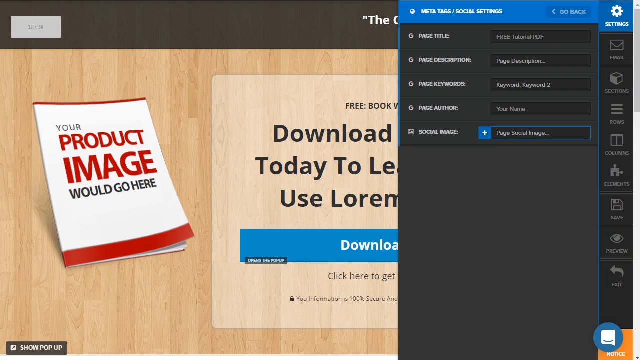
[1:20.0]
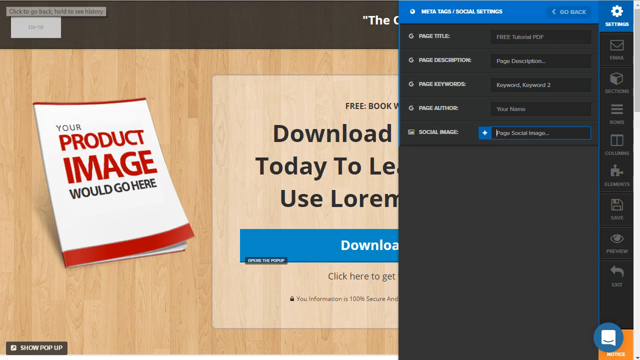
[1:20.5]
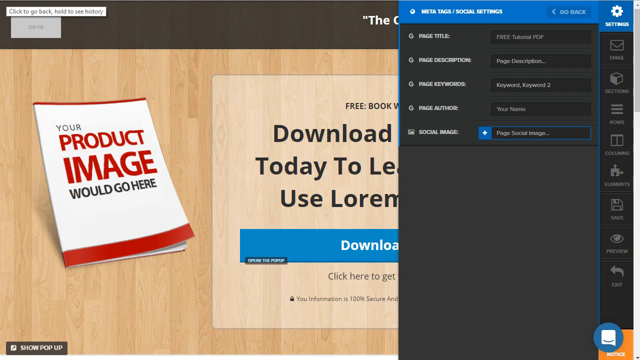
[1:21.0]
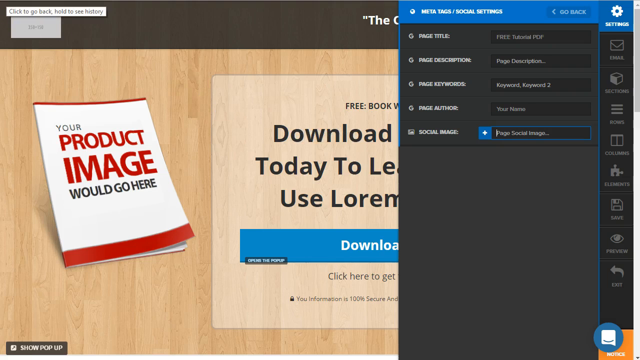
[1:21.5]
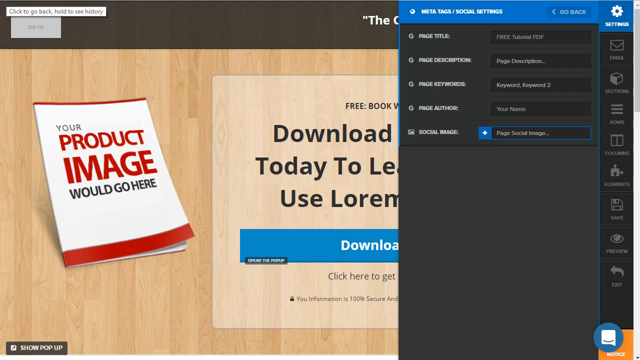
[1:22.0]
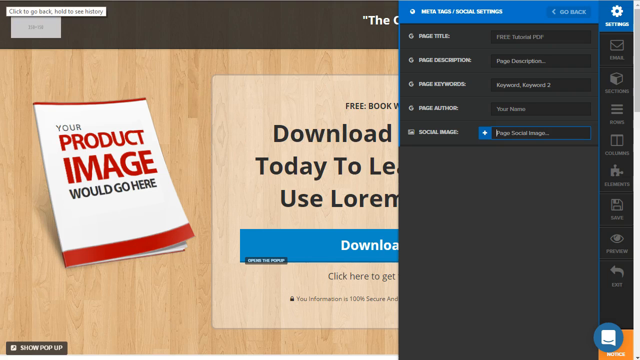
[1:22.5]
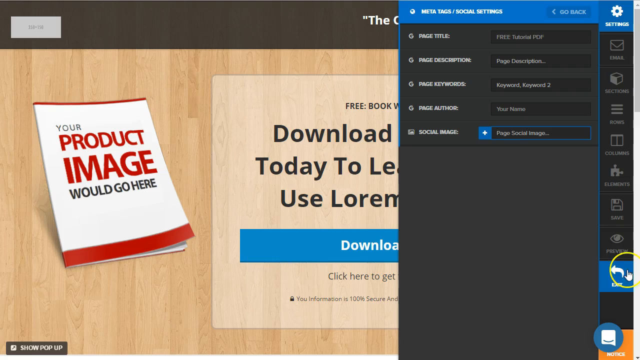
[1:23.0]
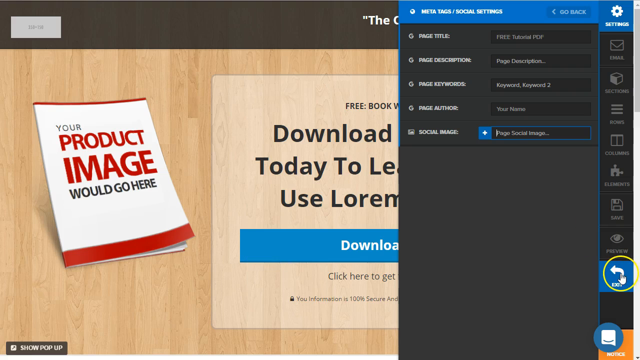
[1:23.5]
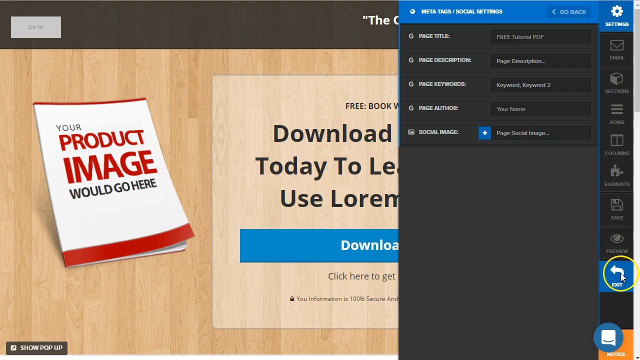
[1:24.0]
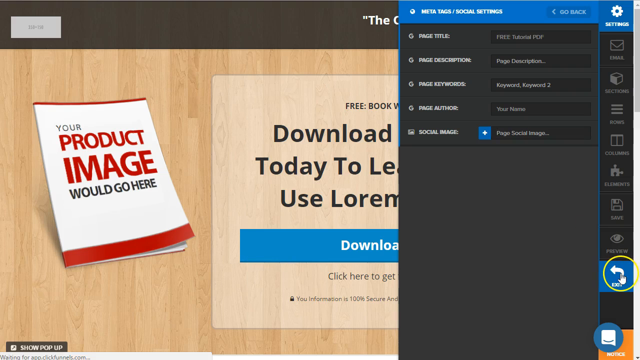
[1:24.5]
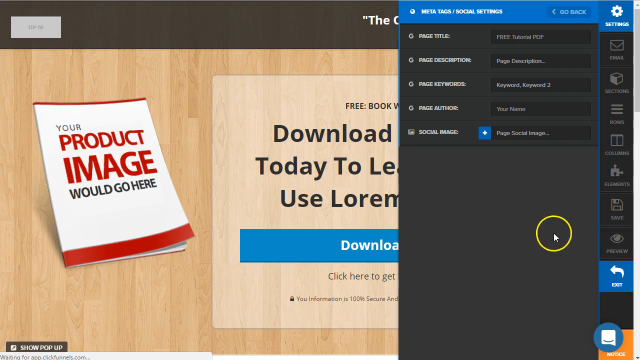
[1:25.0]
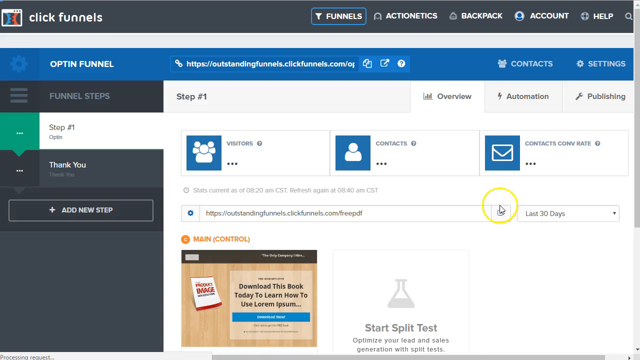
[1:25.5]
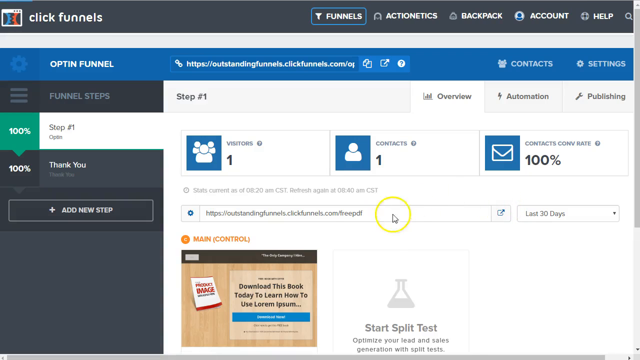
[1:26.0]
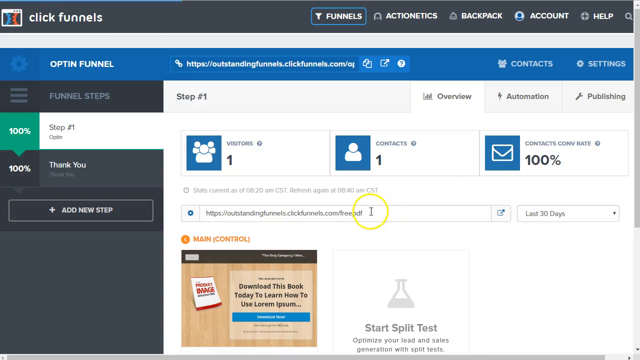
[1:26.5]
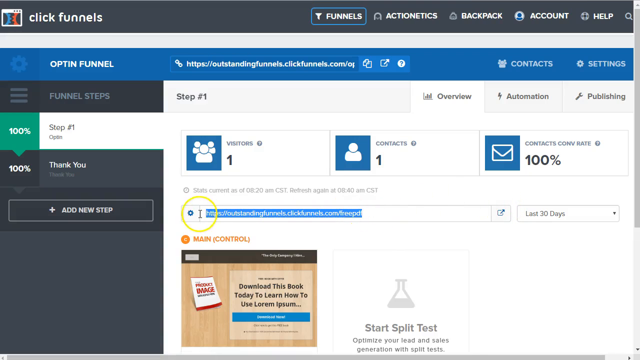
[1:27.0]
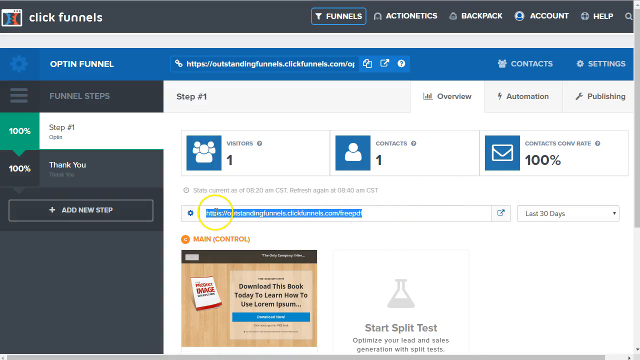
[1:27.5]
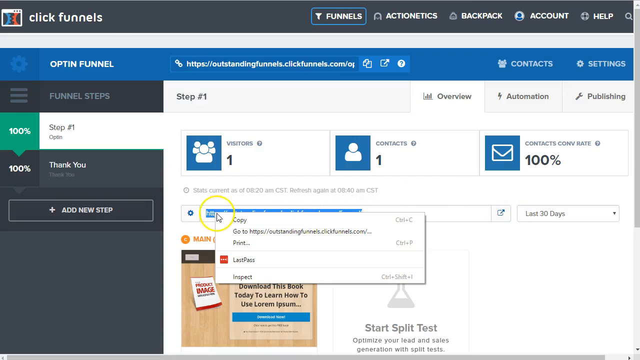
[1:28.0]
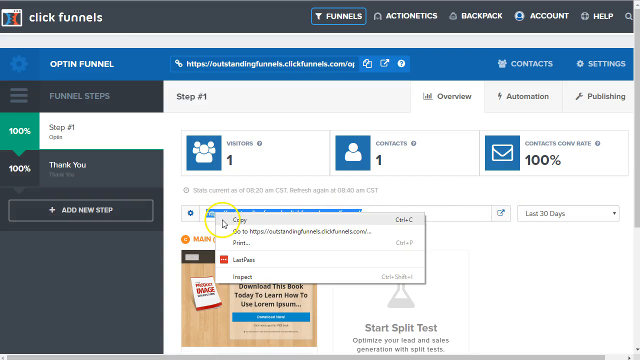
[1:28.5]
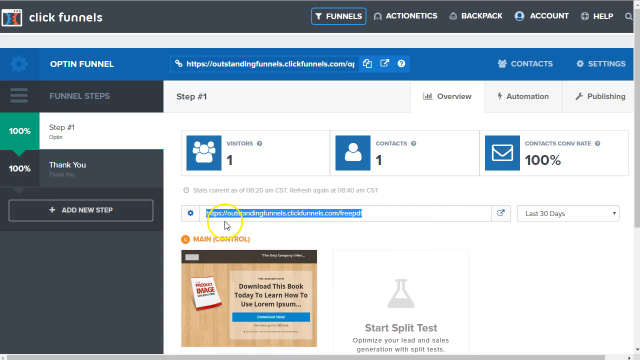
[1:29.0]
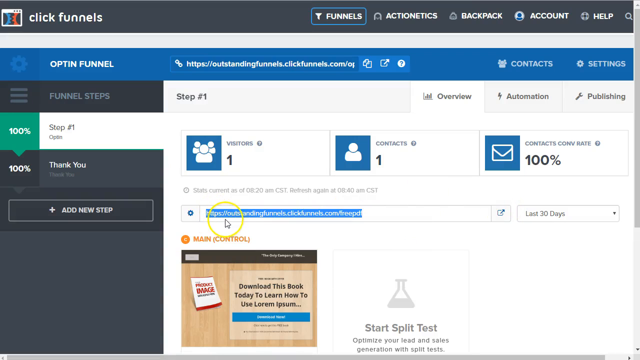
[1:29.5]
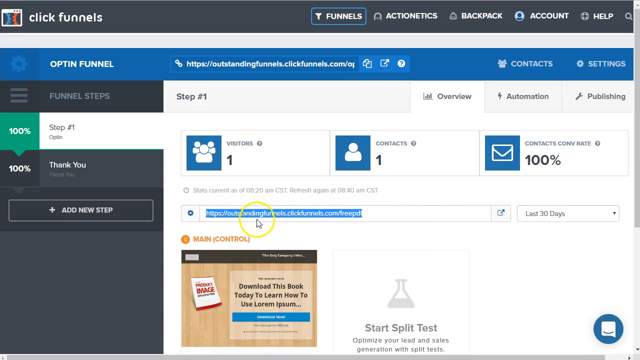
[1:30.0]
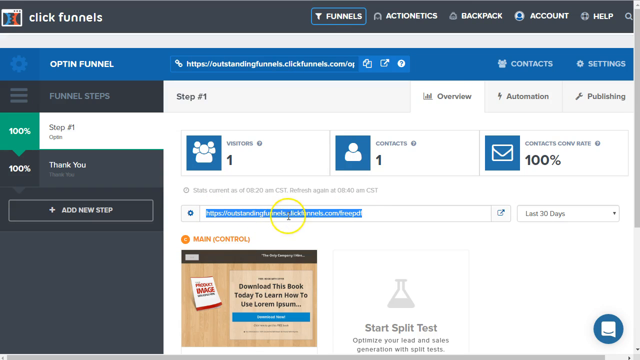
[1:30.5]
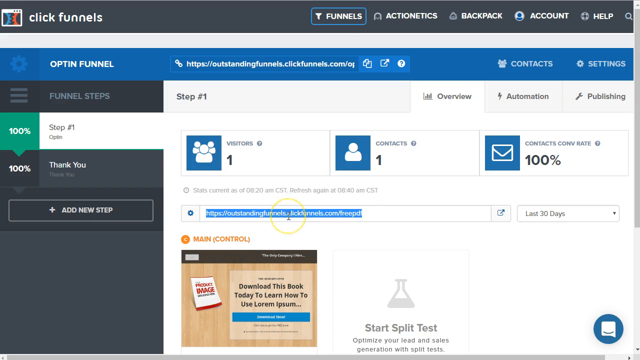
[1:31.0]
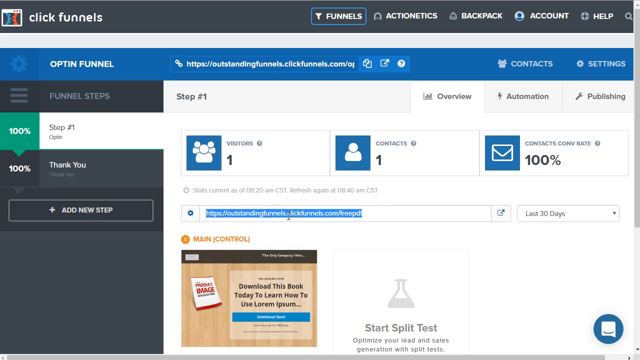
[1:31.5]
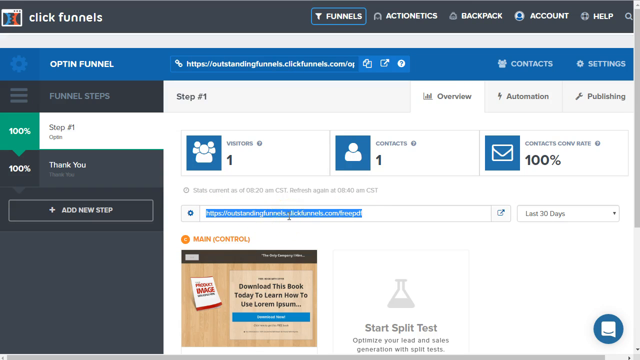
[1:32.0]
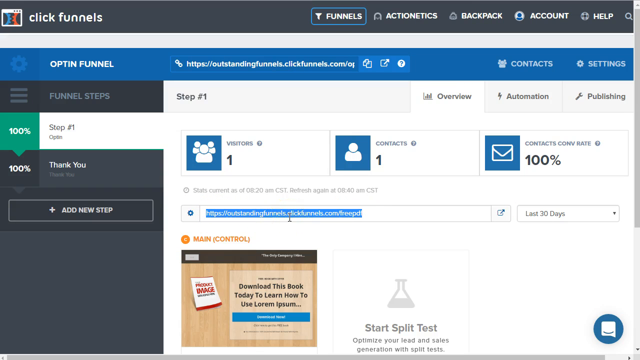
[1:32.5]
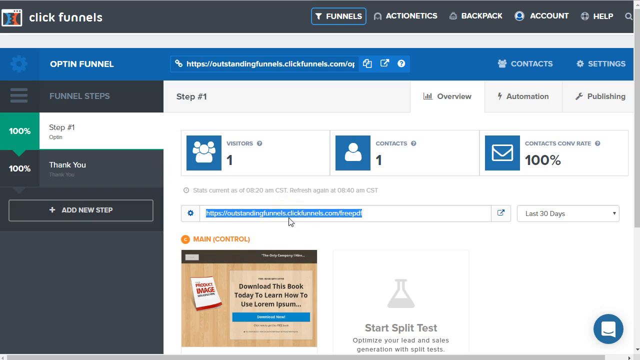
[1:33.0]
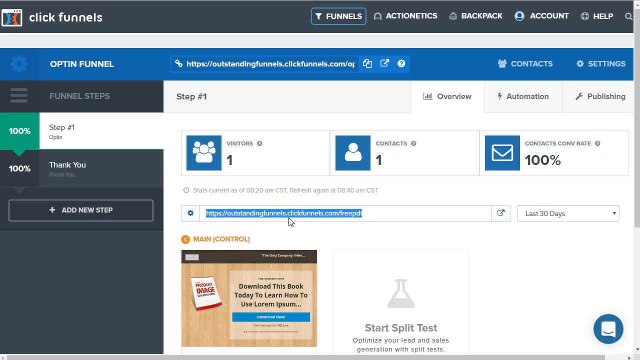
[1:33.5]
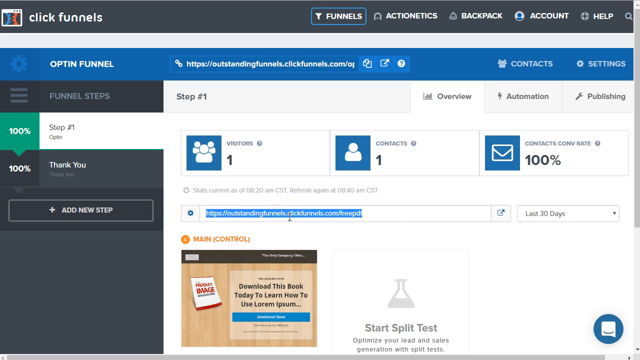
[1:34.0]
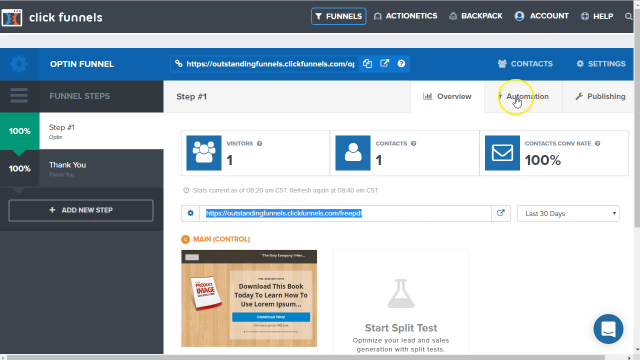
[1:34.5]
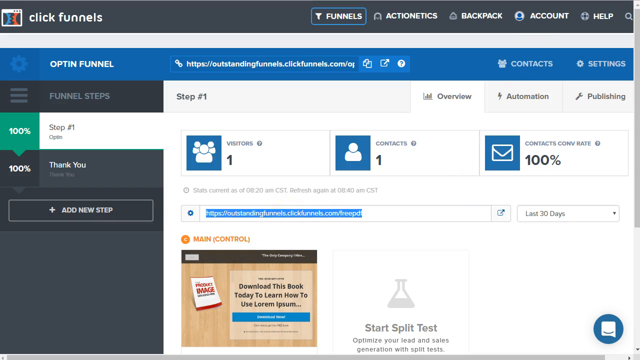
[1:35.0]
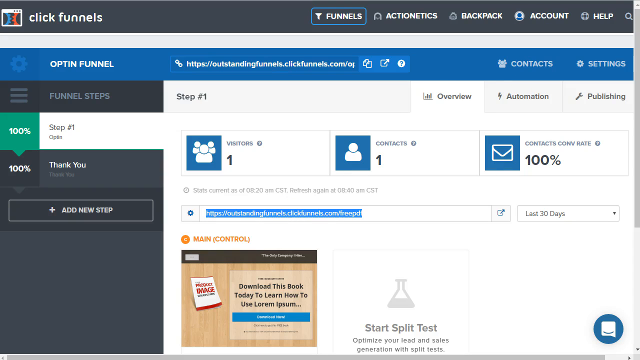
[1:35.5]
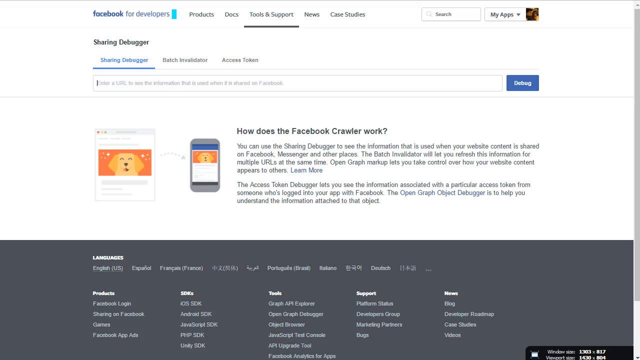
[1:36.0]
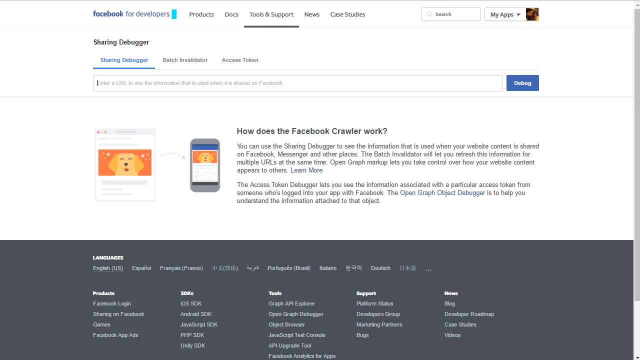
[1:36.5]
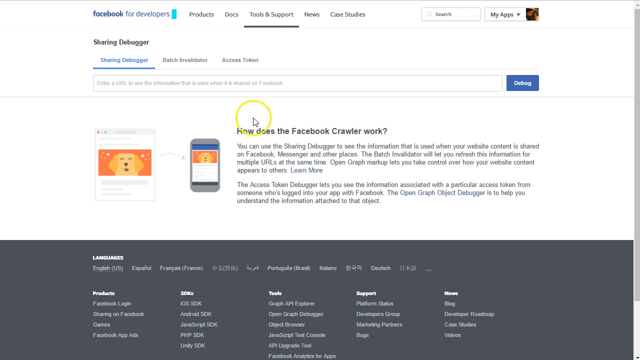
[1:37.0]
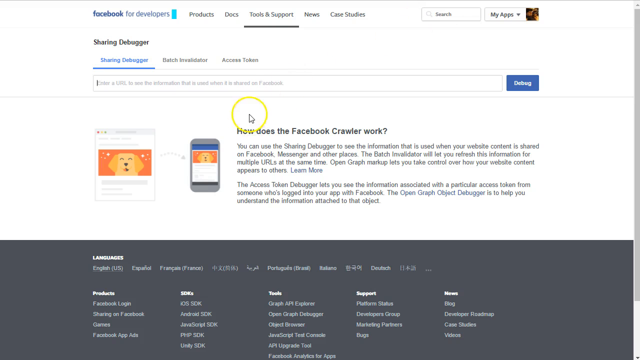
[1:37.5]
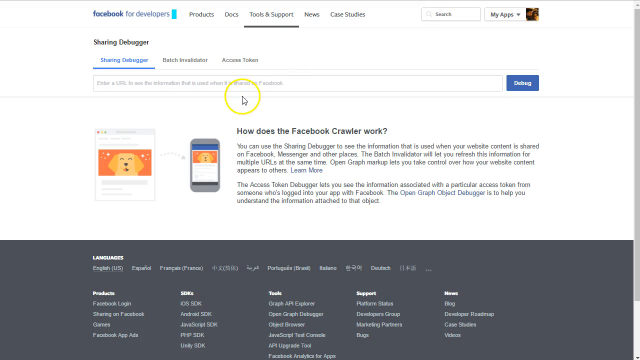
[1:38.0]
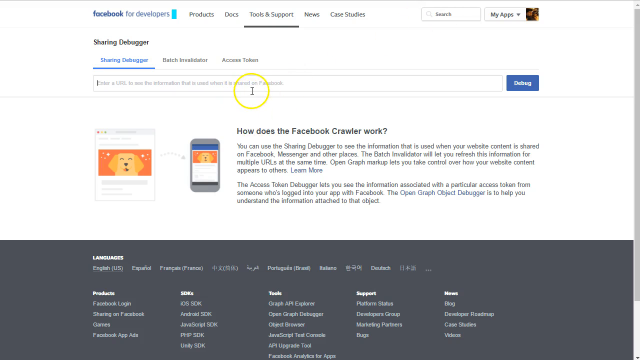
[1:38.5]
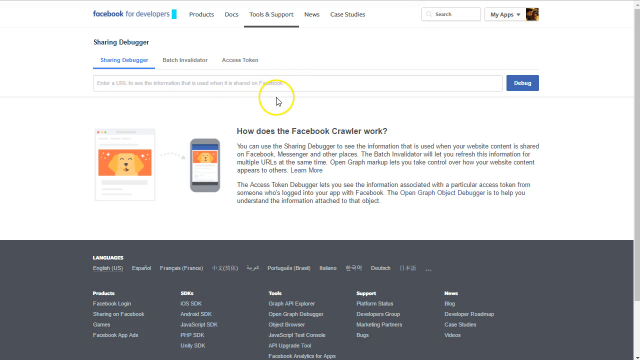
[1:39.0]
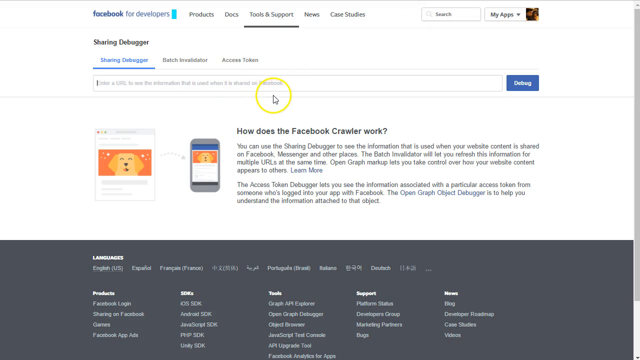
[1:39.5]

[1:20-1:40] A computer page says "your product image would go here" on a book, promoting a program to promote a business, with a free copy of the book available to download. The cursor, inside a large yellow circle, moves across the website from left to right and back again. The website is Click Funnels, and it has directions: step one shows 100% and is marked in green, while a "thank you" step in black also says 100% but is not highlighted or checked off. There is a box to add a new step. Step one is shown, with overview, automation and publishing sections. A pop-up appears with the words "copy" and "paste," and the website address entered in a search bar in the middle of the page is circled in blue.